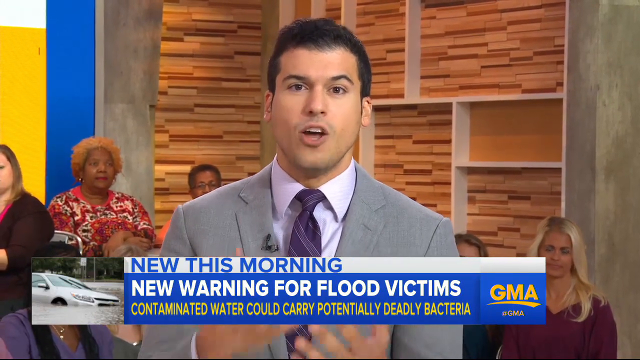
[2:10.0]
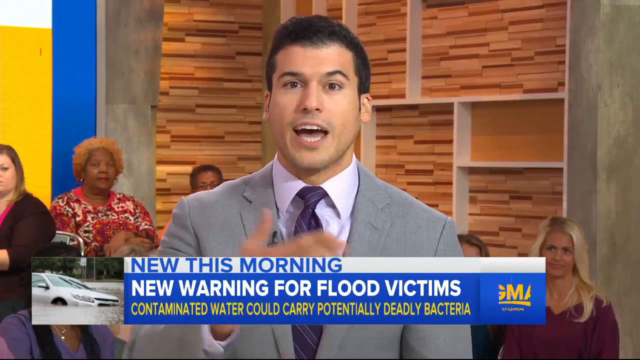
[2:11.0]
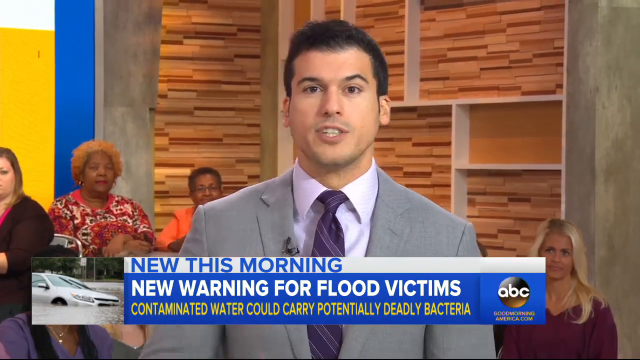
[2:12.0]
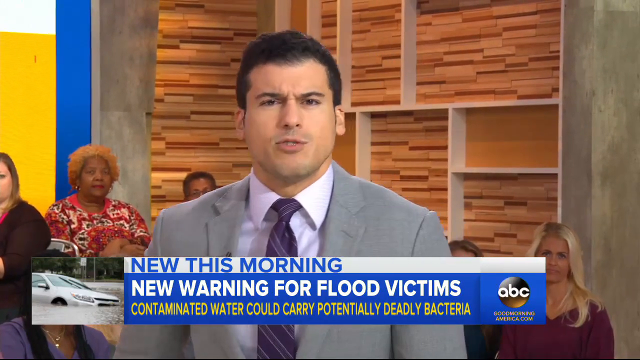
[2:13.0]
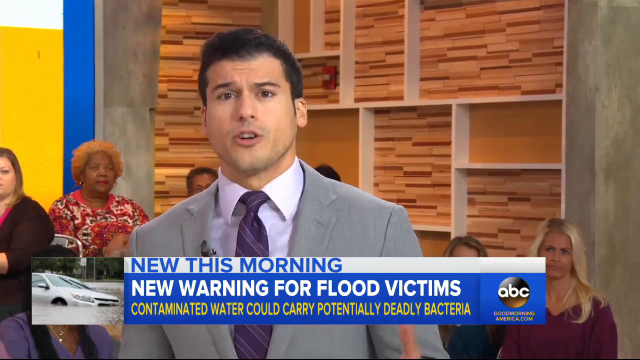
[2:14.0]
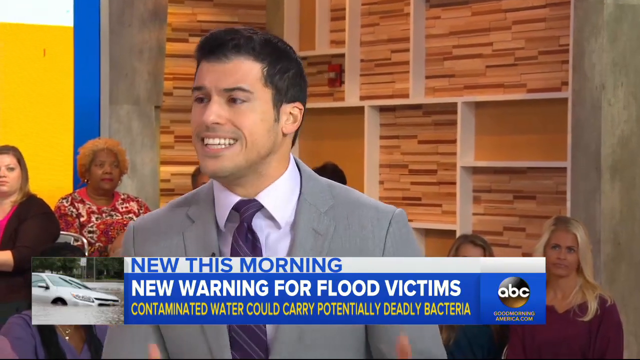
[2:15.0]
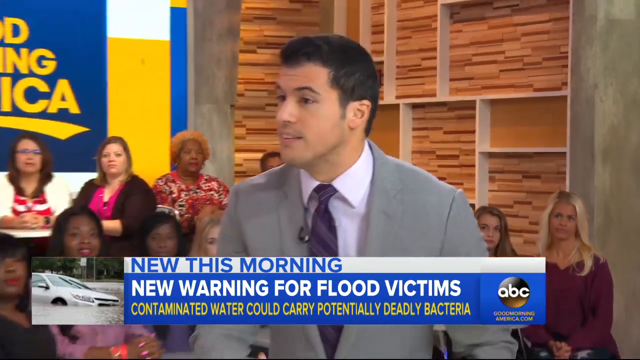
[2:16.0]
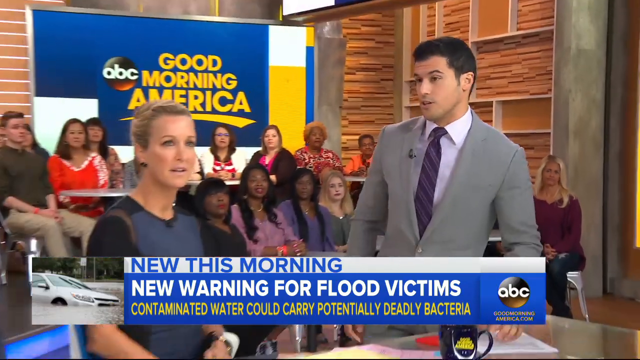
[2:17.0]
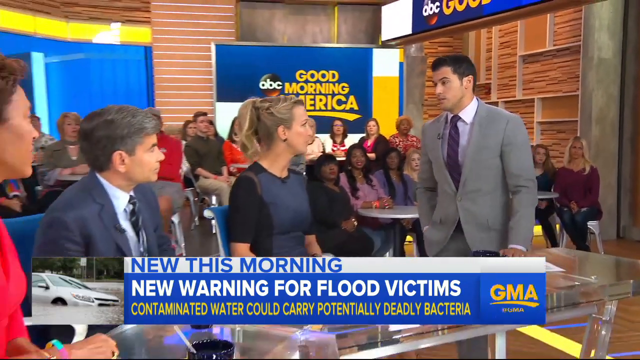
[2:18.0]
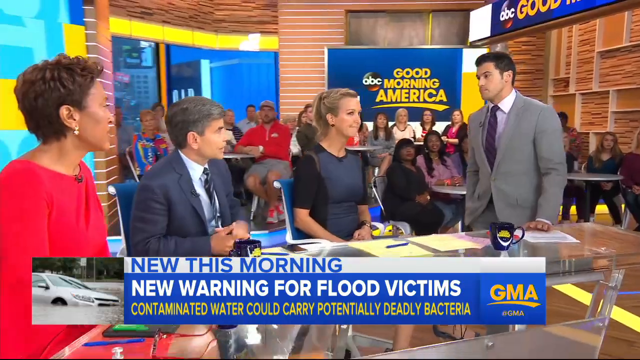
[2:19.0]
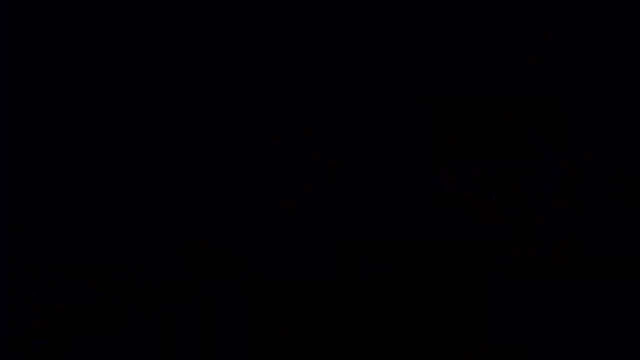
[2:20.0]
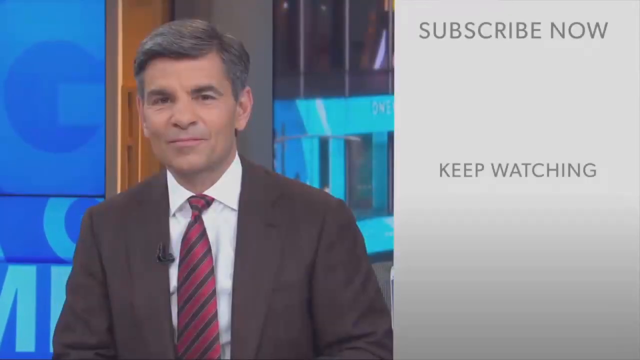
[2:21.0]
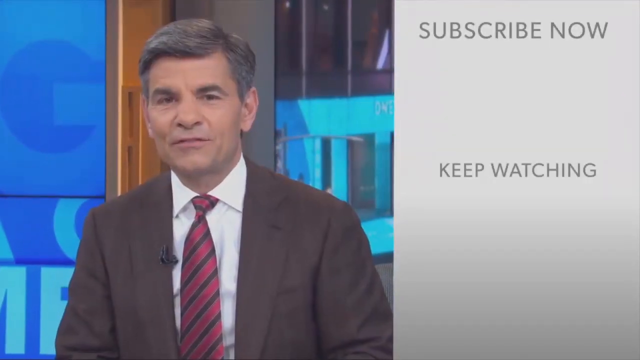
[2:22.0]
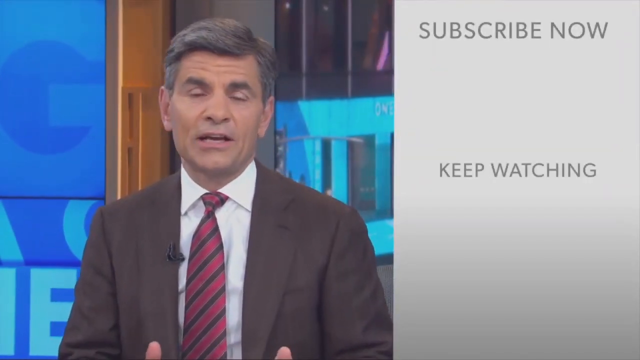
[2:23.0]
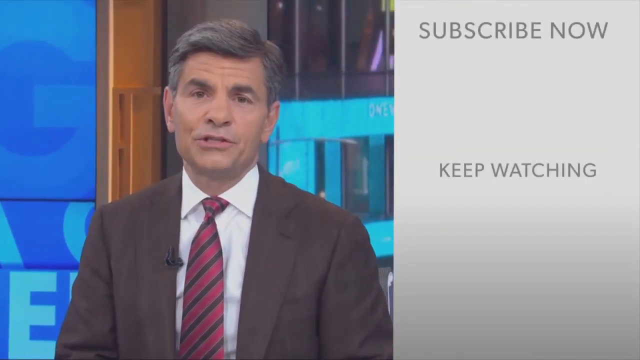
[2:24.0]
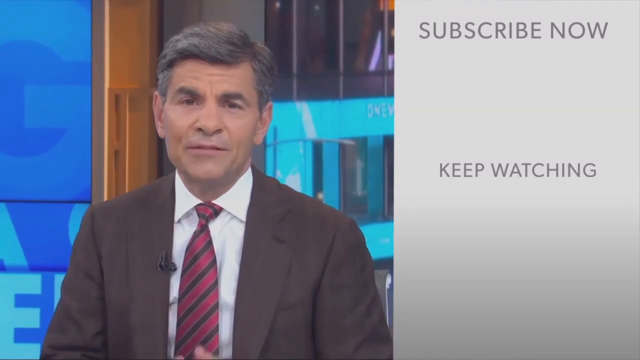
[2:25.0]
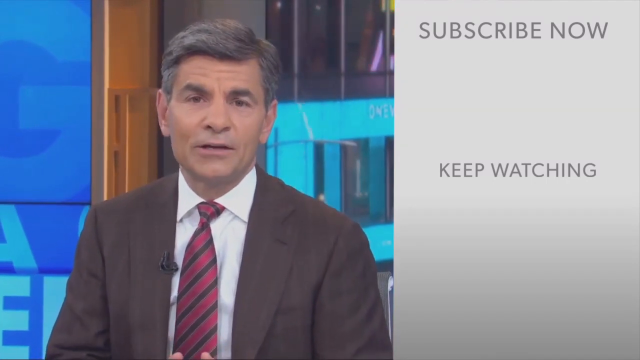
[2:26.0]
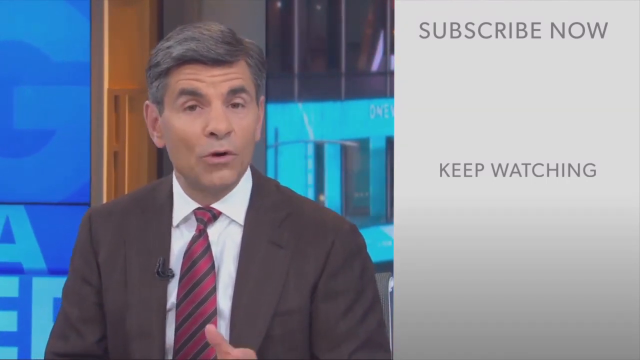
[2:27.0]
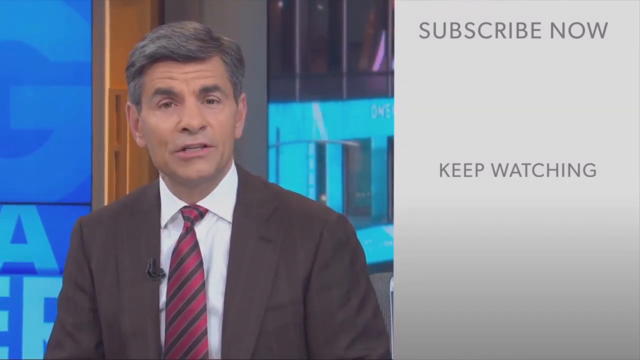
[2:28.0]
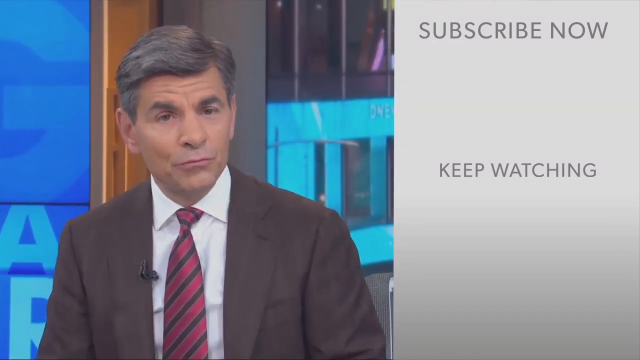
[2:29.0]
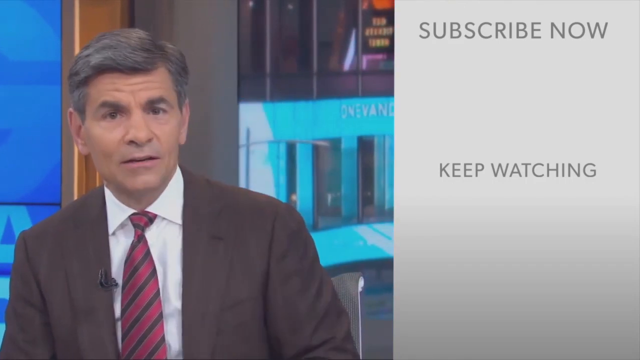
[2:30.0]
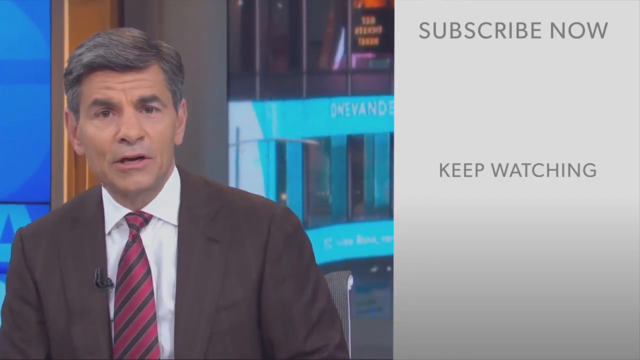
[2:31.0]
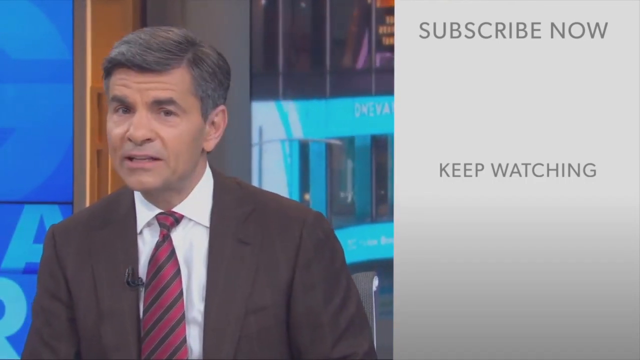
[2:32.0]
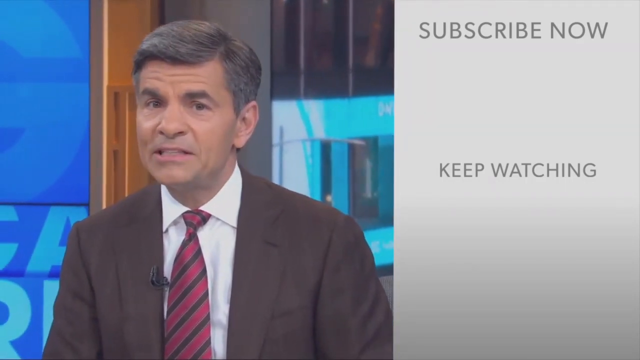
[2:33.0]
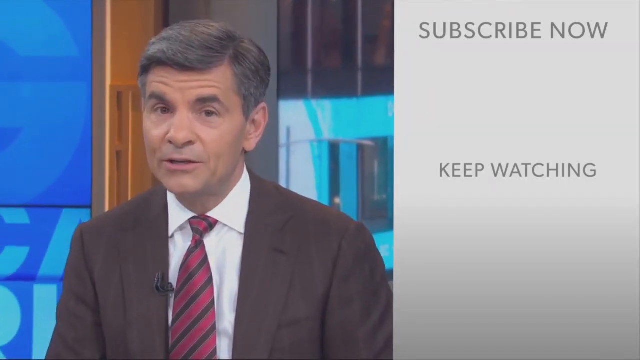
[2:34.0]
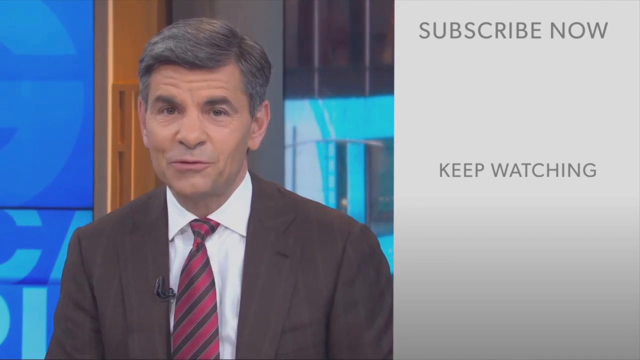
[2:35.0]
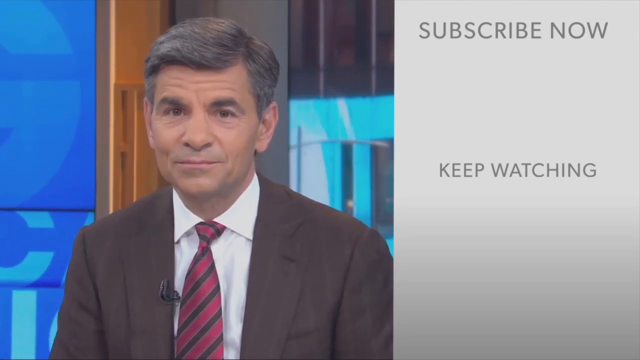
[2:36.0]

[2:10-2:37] This Good Morning America news report concerns the possibility of floodwaters being contaminated with a potentially deadly bacteria. A news text banner at the bottom of the screen reads, "New this morning, New warning for flood victims. Contaminated water could carry potentially deadly bacteria." The Good Morning America logo is next to it and periodically changes to the ABC logo. A presenter in a studio speaks to the camera, with people seated in the studio behind him; he and his facial expressions are very animated. The camera pulls away from him to show a panel of four presenters seated at a desk next to him, with a studio audience seated behind them, and he briefly turns to speak to them. The screen then switches to a video of George Stephanopoulos on the left side speaking directly to the camera, with text on the right side saying "Subscribe Now" and "Keep Watching."